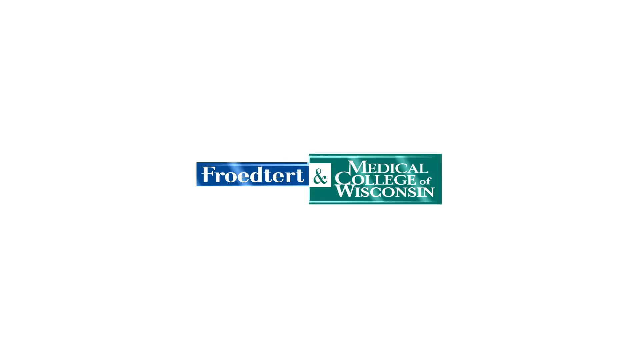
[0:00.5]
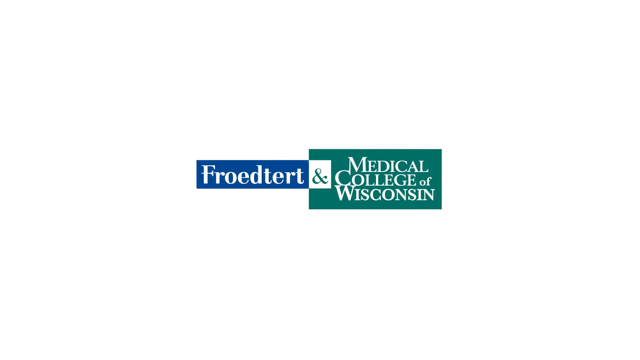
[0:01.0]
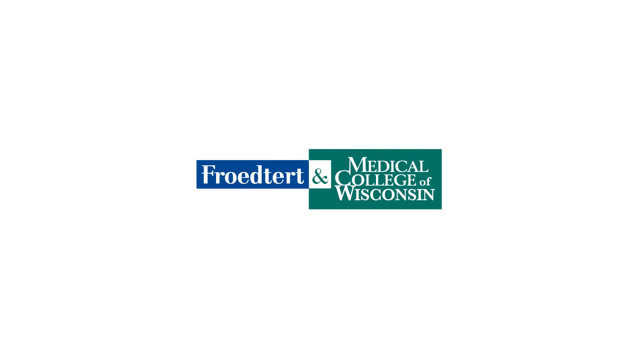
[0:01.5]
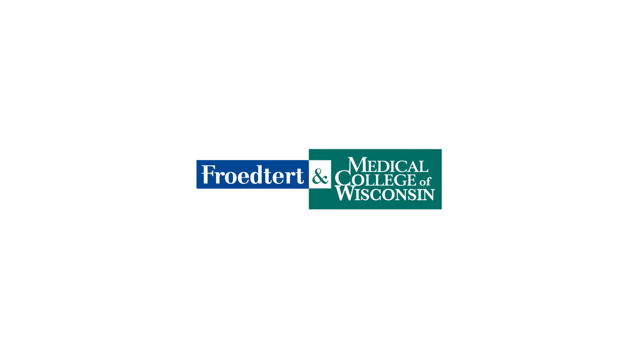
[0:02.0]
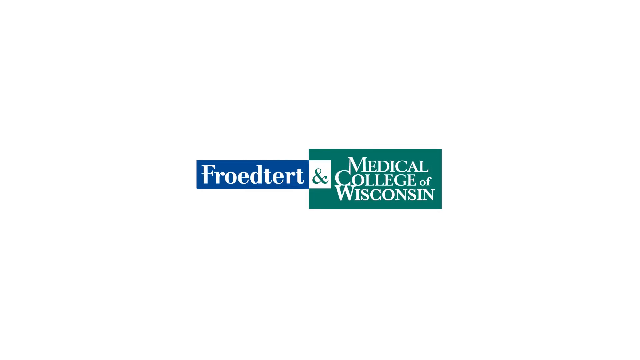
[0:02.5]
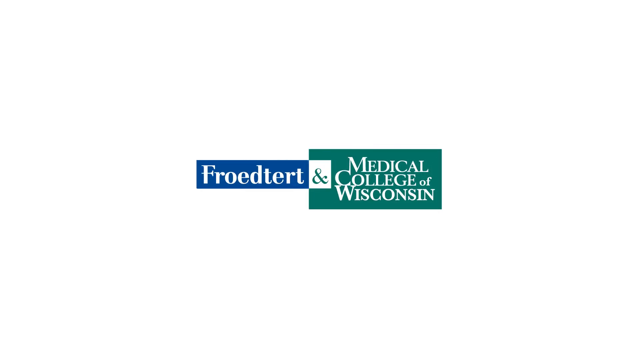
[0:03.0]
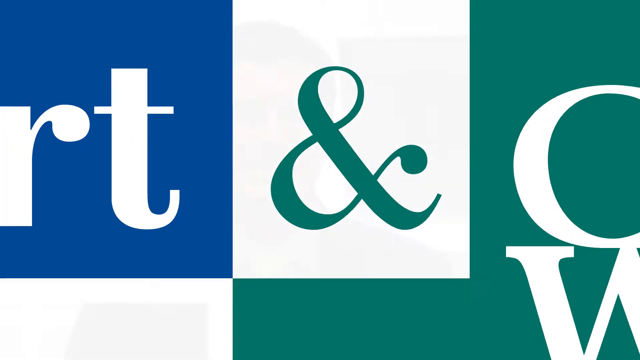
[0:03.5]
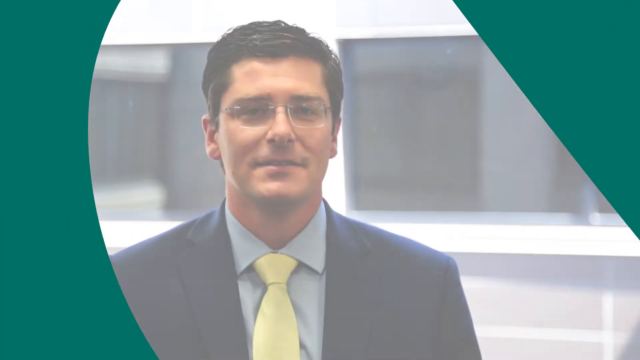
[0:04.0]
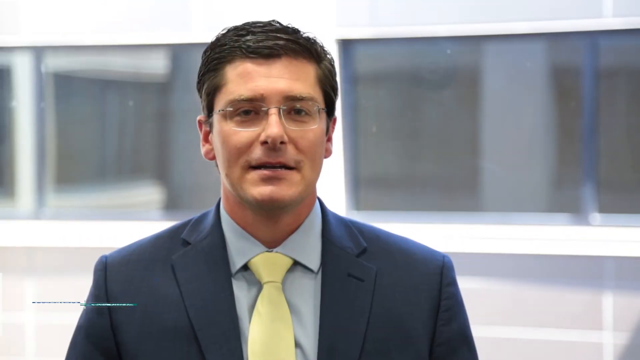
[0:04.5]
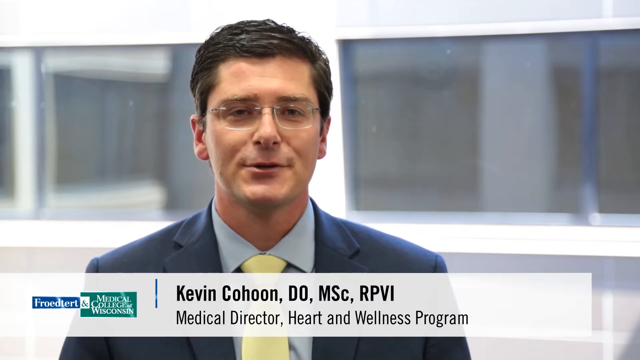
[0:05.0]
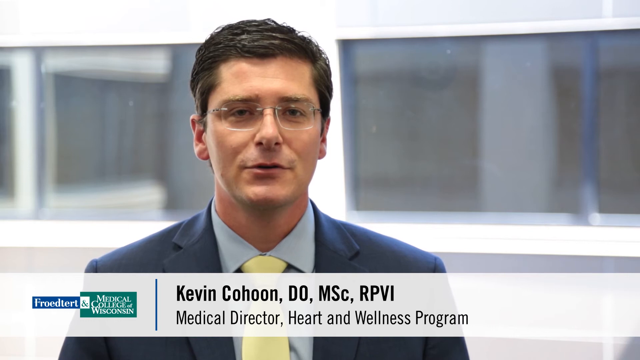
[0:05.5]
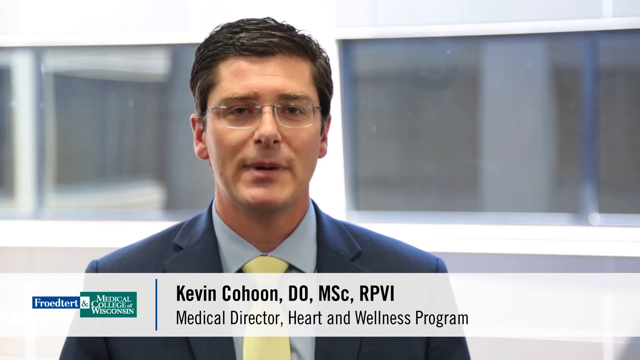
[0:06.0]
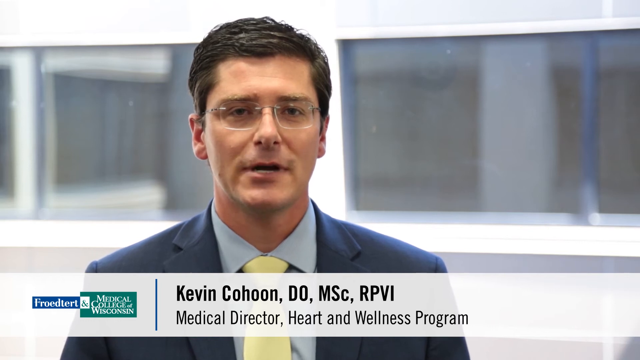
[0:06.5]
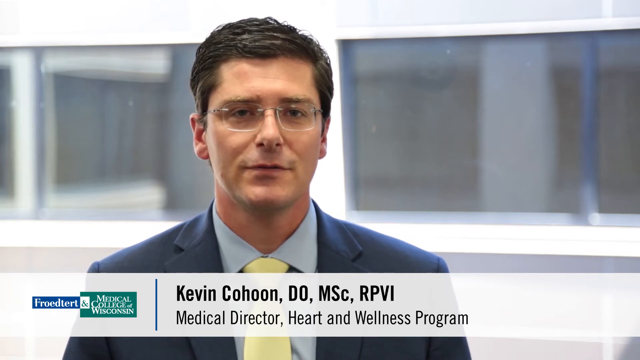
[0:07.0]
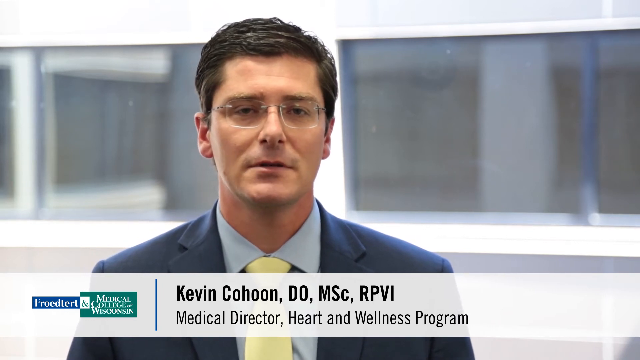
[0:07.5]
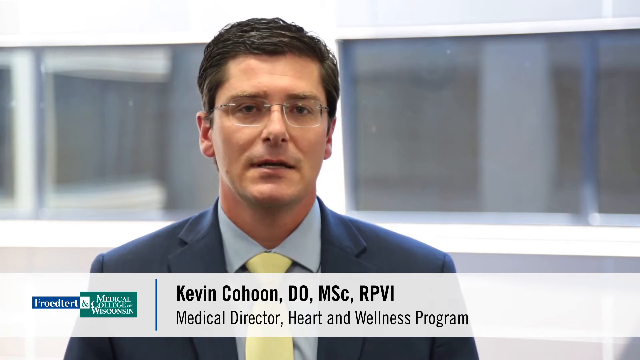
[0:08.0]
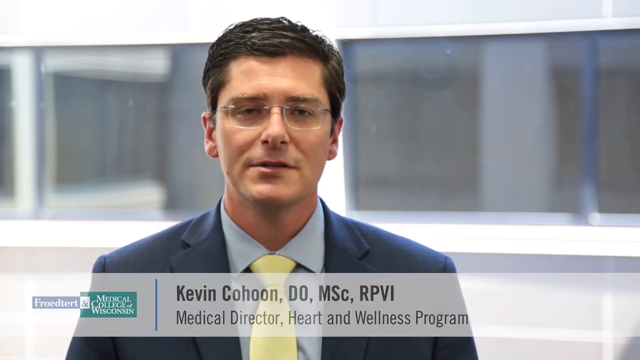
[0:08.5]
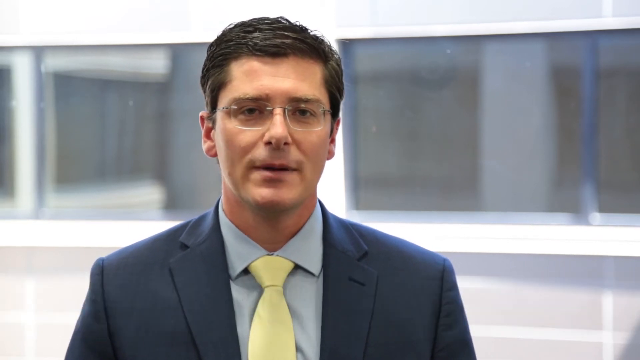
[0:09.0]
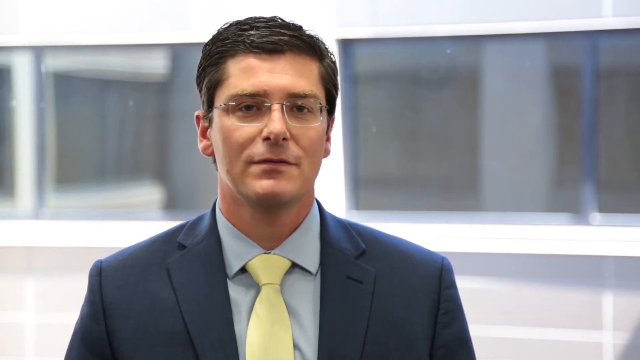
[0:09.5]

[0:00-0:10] The screen identifies the University of Medical College of Washington, highlighted in the bottom corner with a green background and white lettering. The video then cuts to a man standing in front of a building. Behind him the building shows two dark tinted windows, a ledge, and what appears to be an upper ledge. The man is short and dark-haired, with a very dark complexion, and wears small wire-rimmed eyeglasses, a dark navy blue suit, a lighter blue undershirt, and a long gold or yellowish light-colored tie down the front of his chest. He is speaking. Text at the bottom identifies him as the Medical Director of the Heart and Wellness Program of the Medical College of Wisconsin.